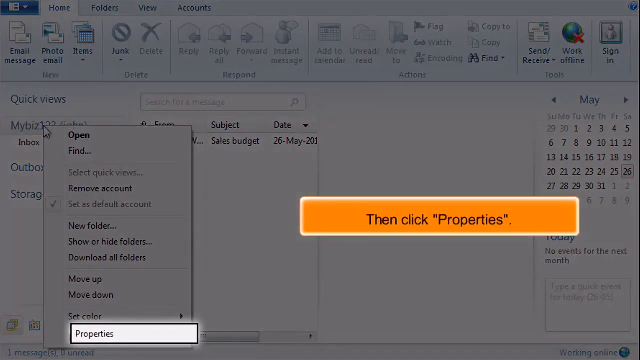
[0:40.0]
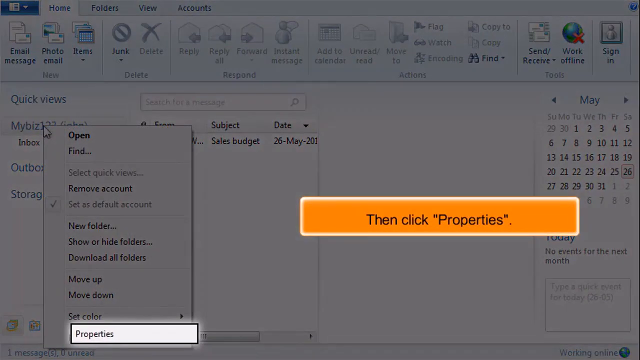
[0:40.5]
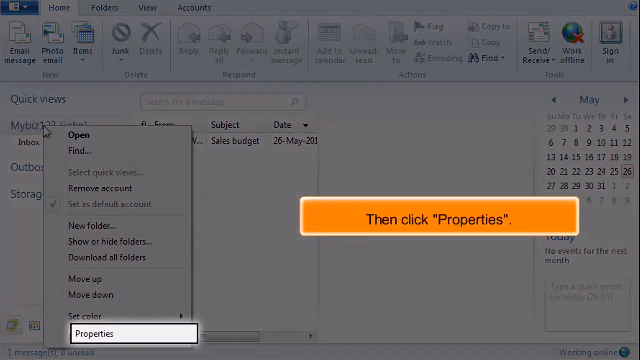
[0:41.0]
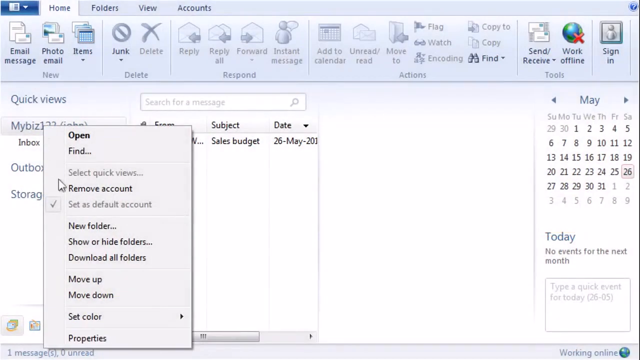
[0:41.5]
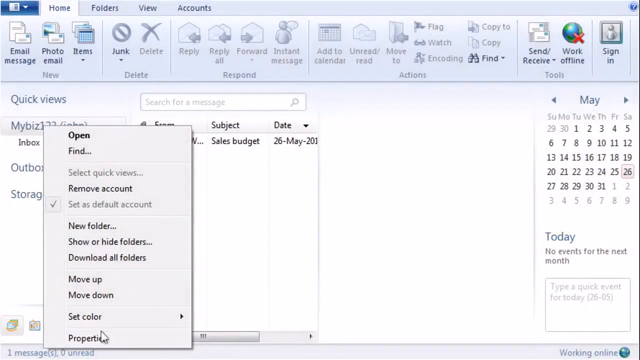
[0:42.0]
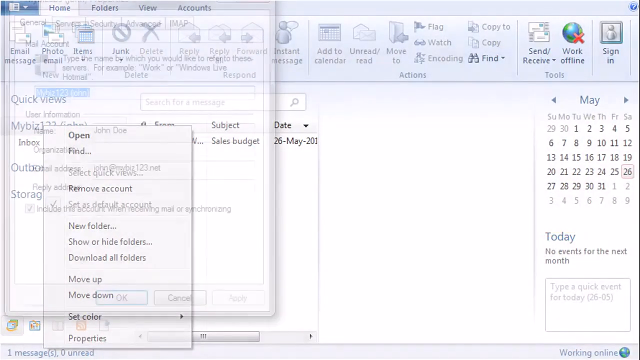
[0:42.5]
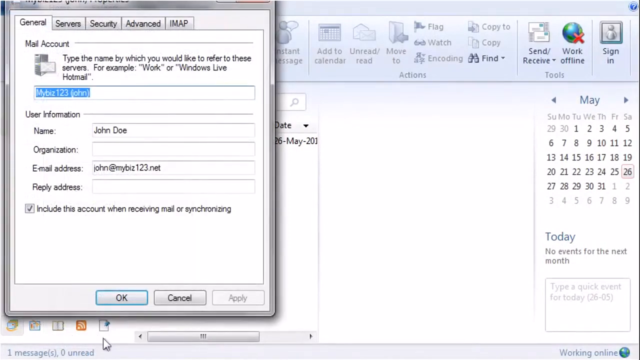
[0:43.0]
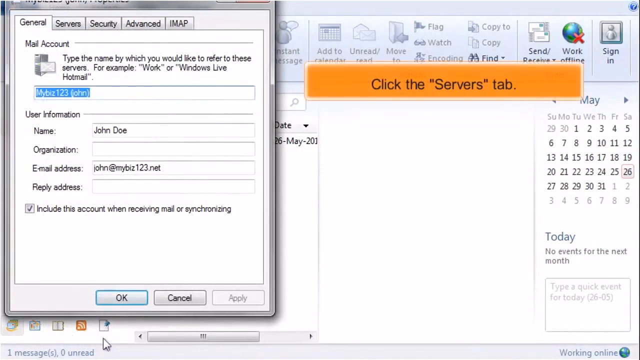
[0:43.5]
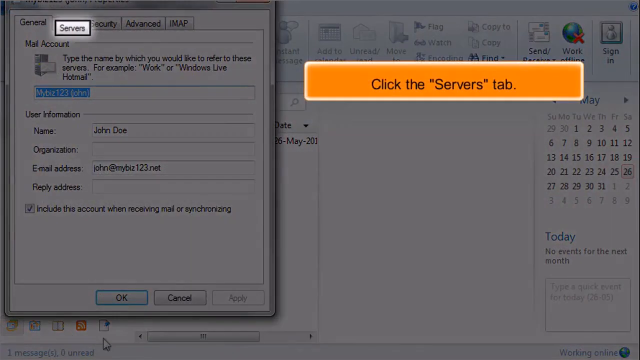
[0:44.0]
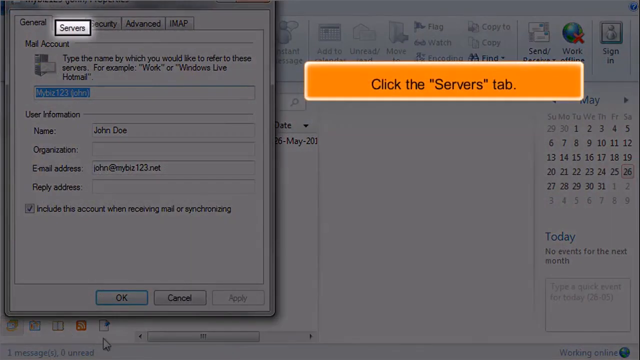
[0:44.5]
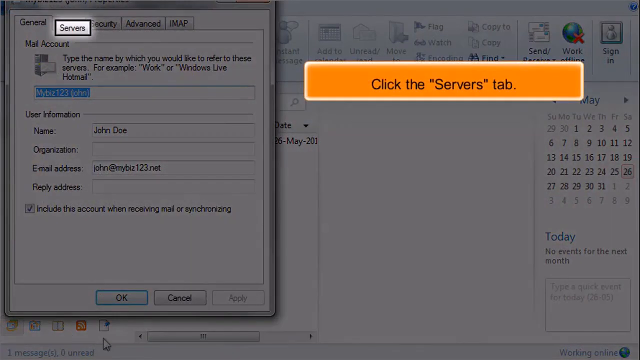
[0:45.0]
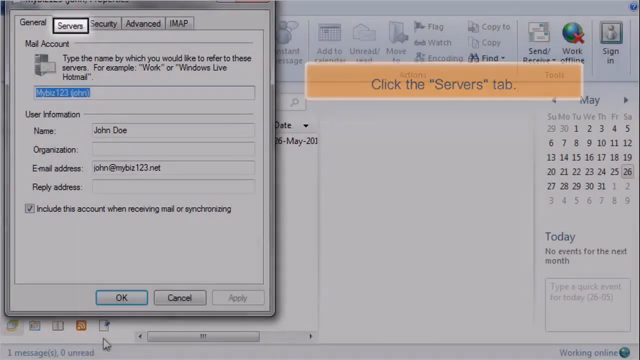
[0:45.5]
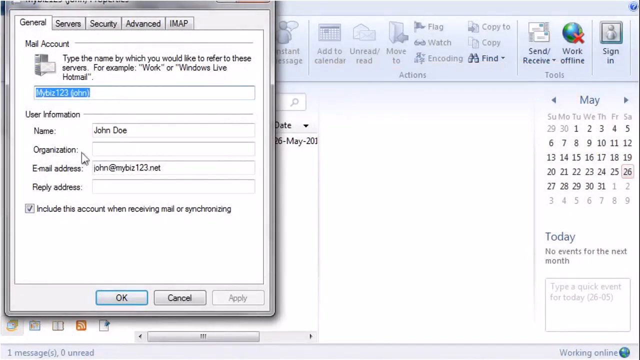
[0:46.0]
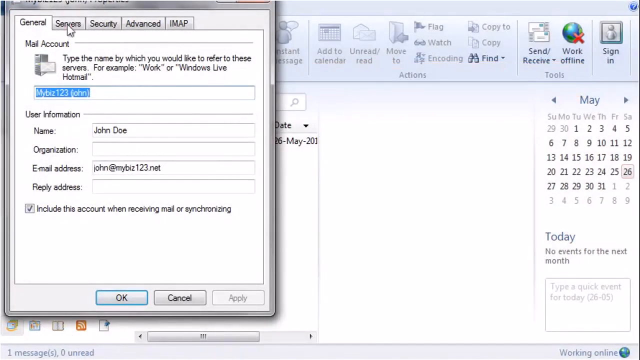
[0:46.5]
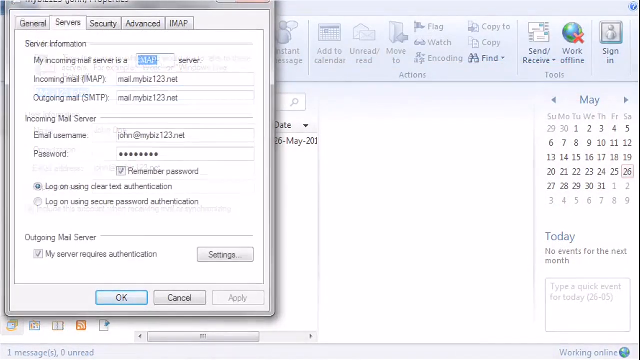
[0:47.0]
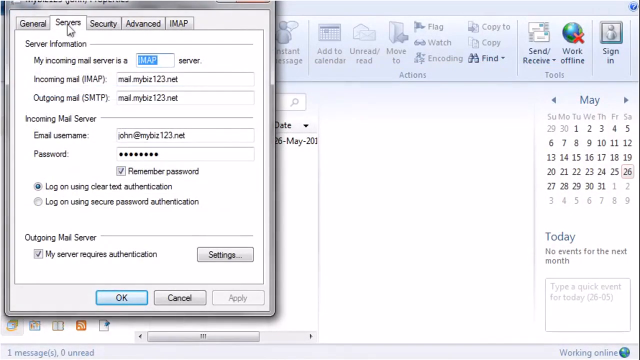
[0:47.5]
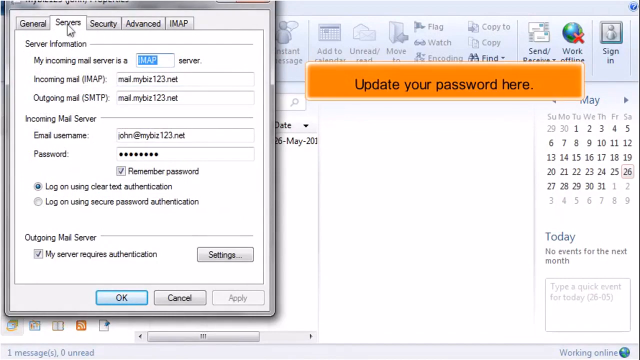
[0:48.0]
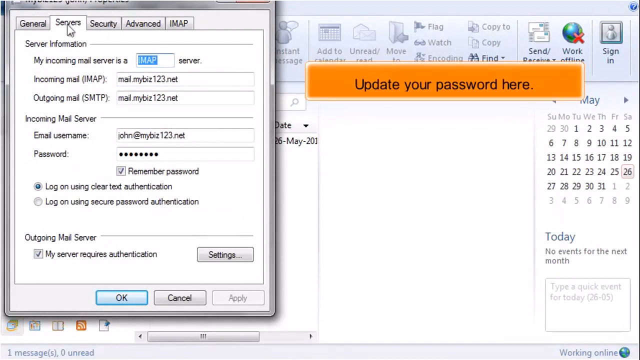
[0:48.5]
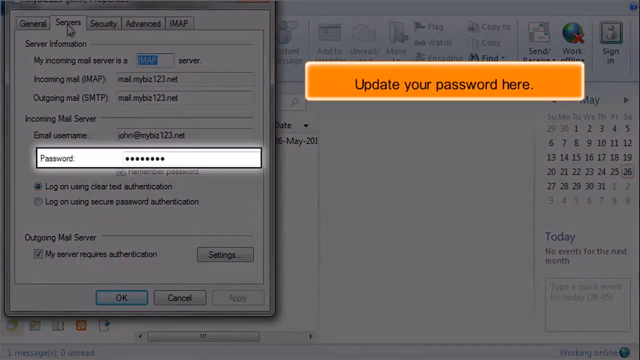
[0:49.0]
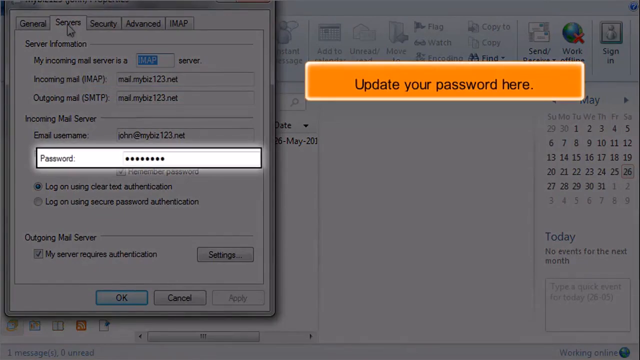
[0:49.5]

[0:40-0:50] This tutorial video by Hostpapa shows how to change an email password in Windows Live Mail. It starts with Windows Live Mail already launched. The user's name is right-clicked, properties is clicked, and then the servers tab is clicked, where the password that needs to be changed appears. Once the password has been changed, OK is clicked.